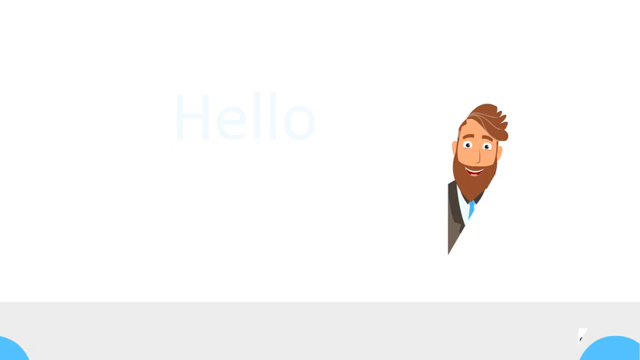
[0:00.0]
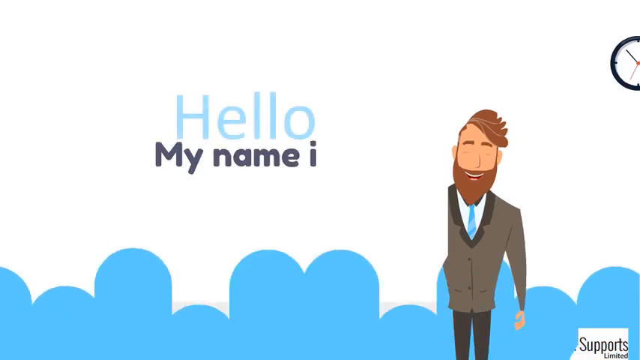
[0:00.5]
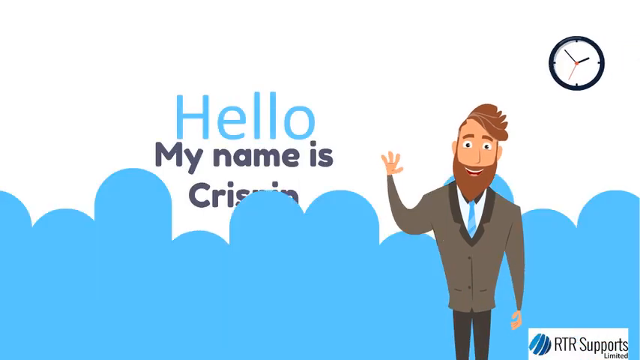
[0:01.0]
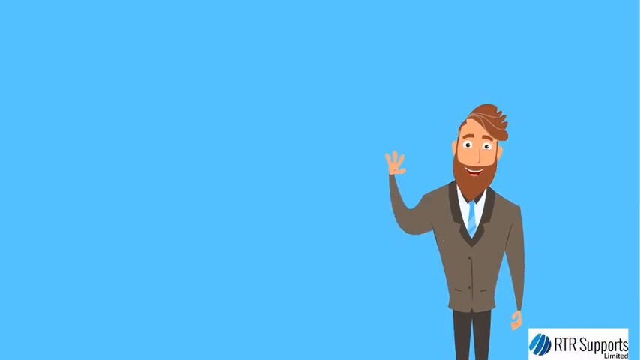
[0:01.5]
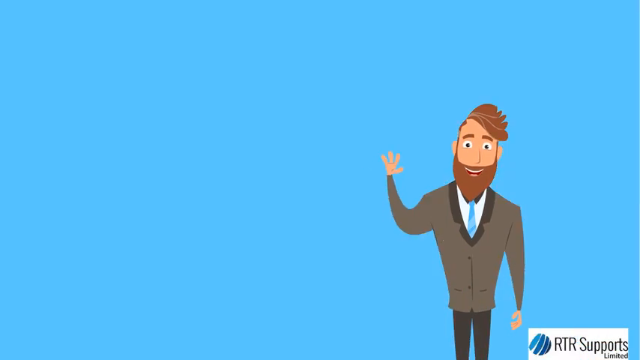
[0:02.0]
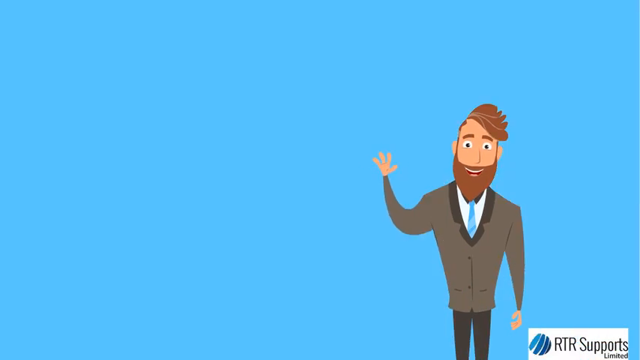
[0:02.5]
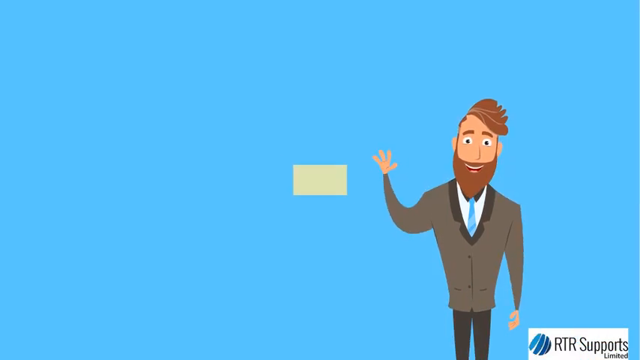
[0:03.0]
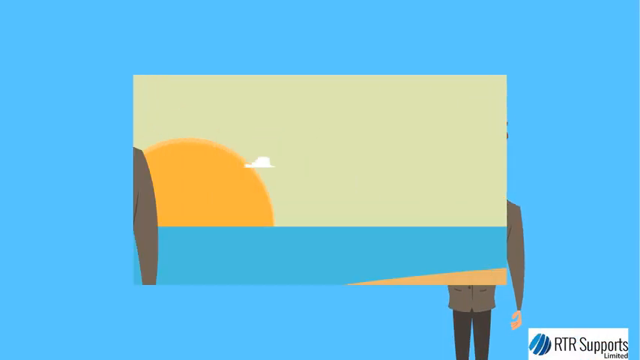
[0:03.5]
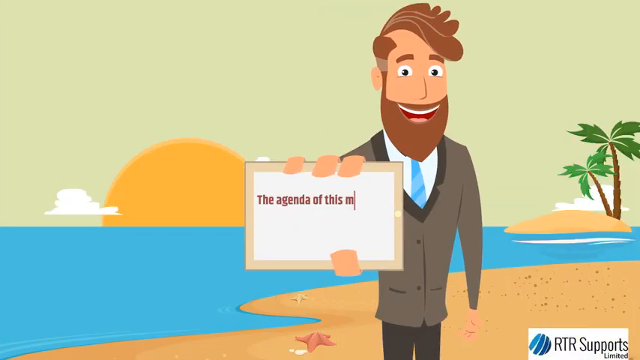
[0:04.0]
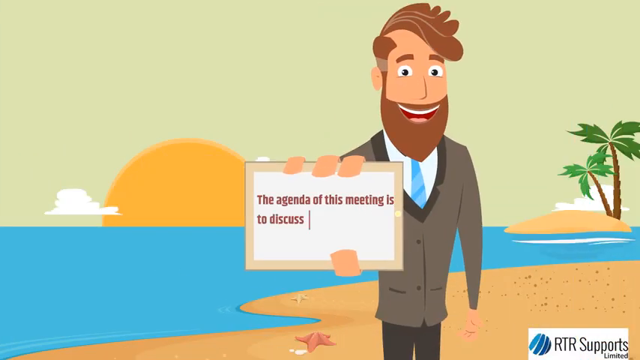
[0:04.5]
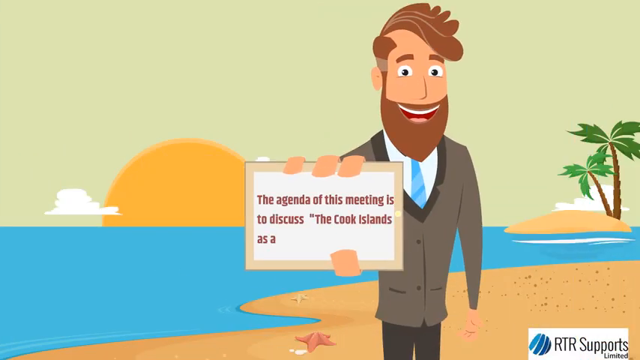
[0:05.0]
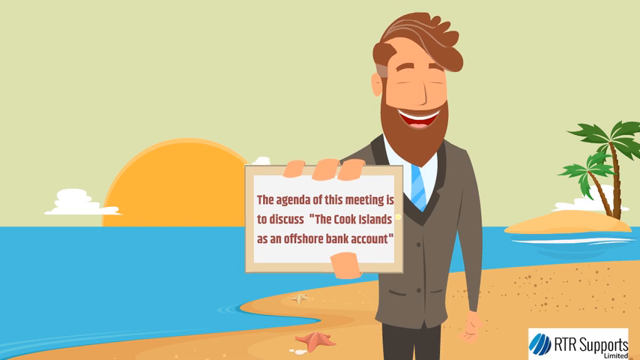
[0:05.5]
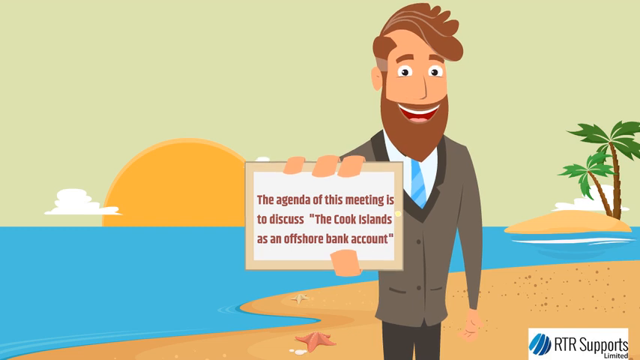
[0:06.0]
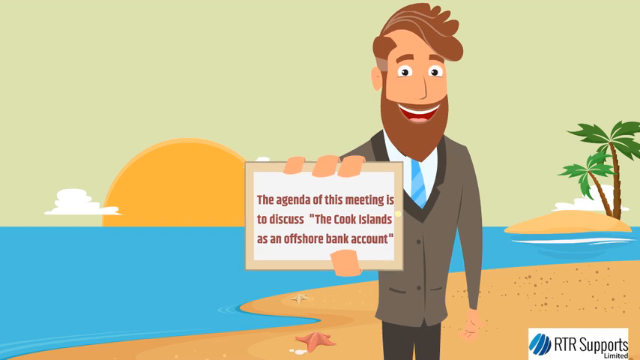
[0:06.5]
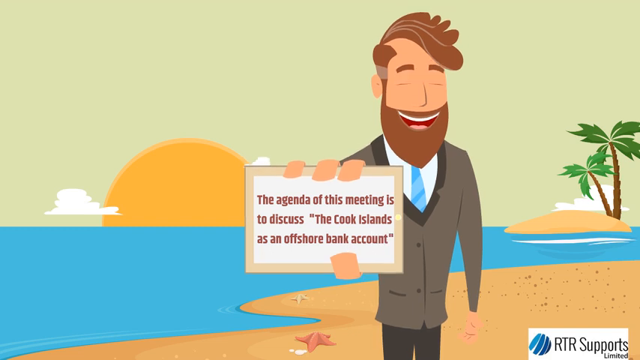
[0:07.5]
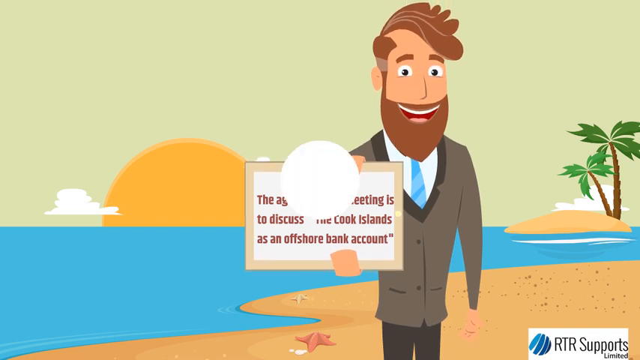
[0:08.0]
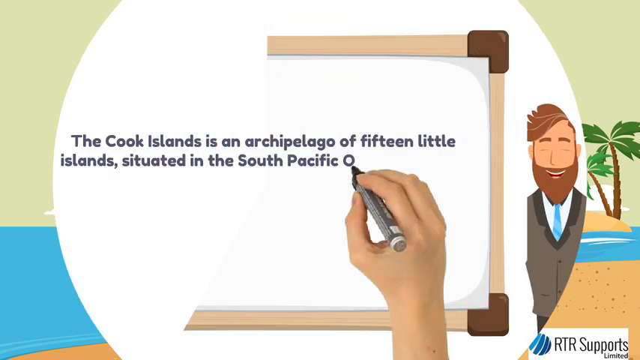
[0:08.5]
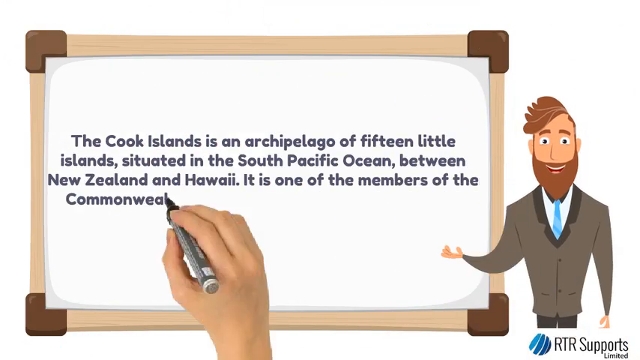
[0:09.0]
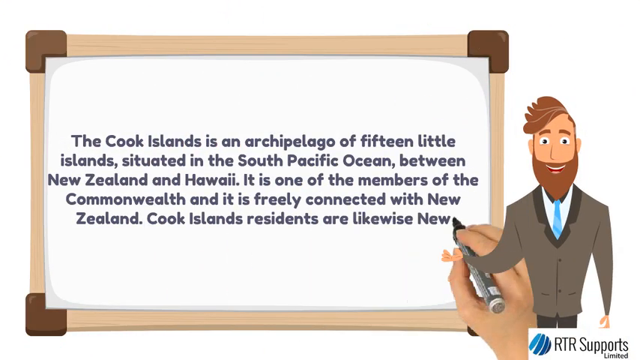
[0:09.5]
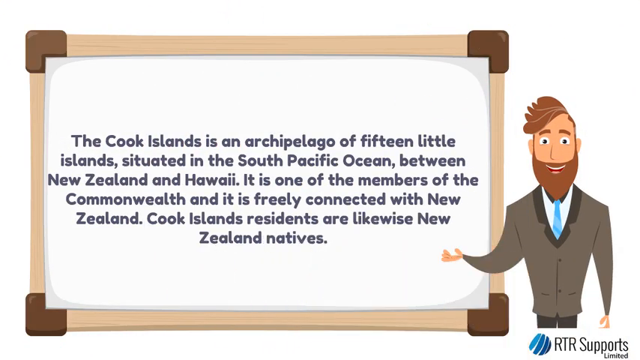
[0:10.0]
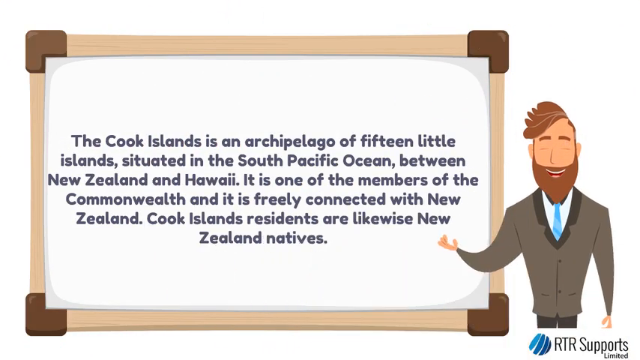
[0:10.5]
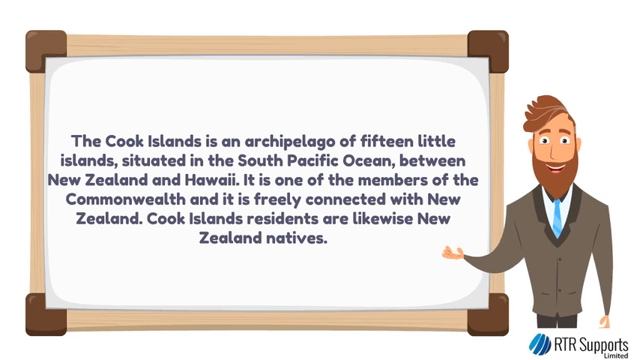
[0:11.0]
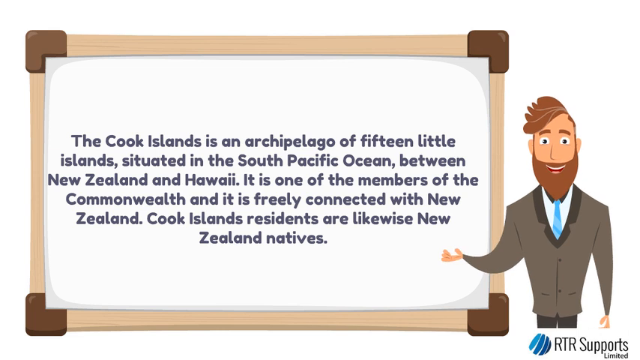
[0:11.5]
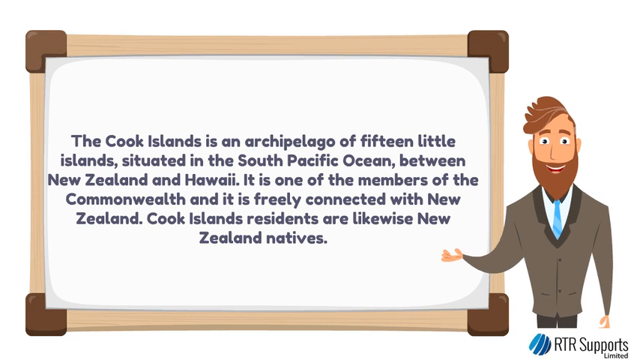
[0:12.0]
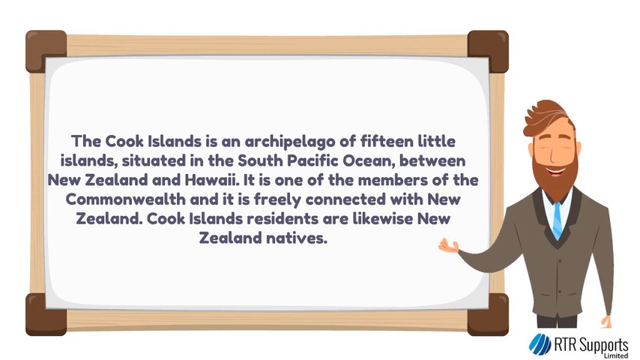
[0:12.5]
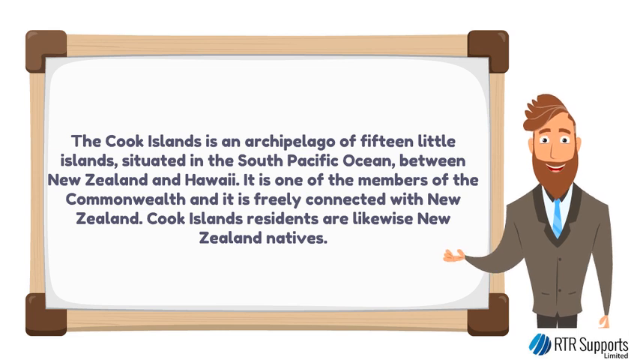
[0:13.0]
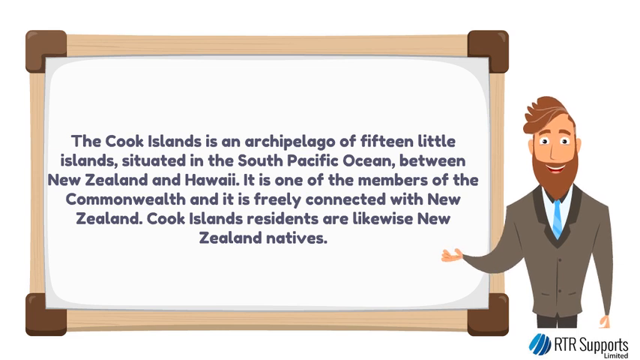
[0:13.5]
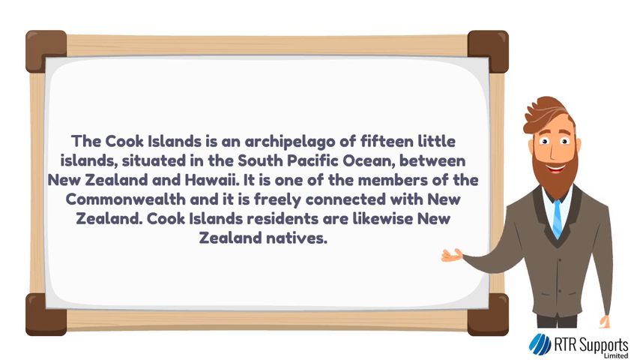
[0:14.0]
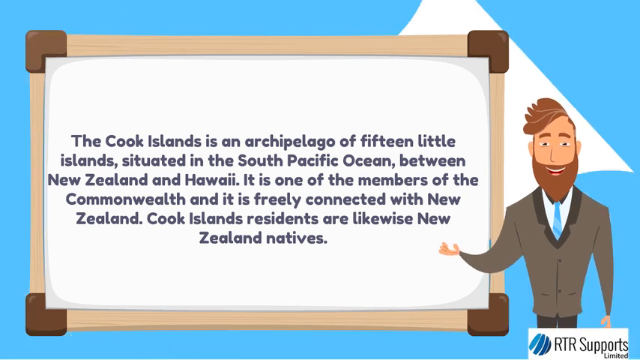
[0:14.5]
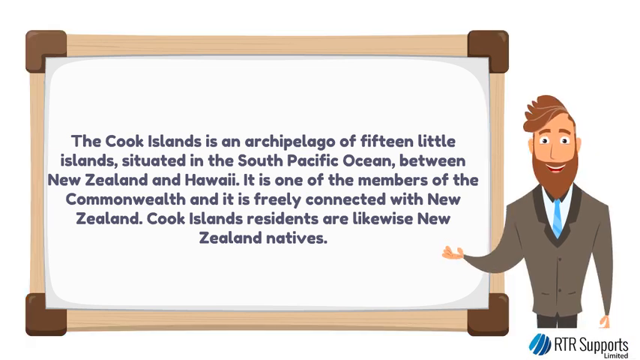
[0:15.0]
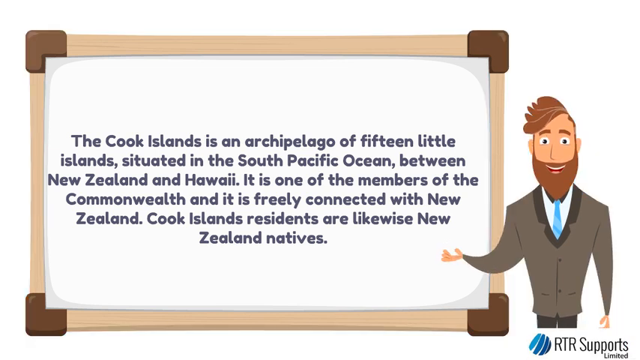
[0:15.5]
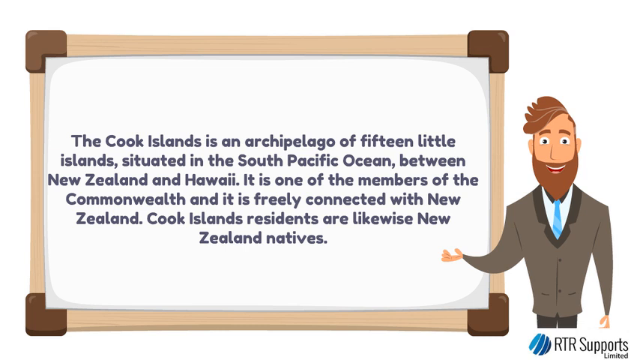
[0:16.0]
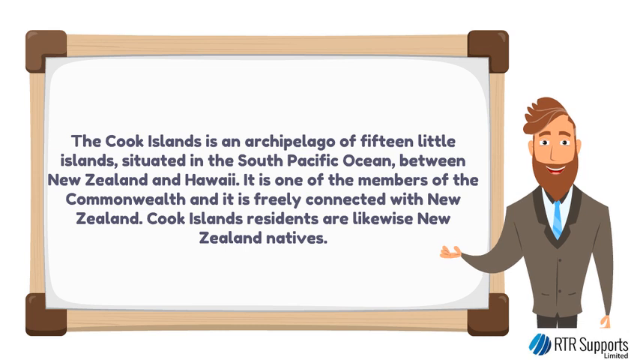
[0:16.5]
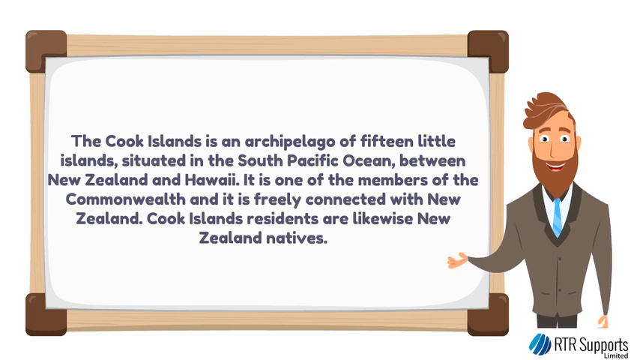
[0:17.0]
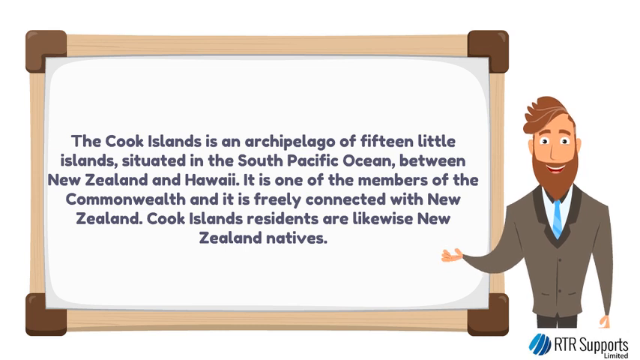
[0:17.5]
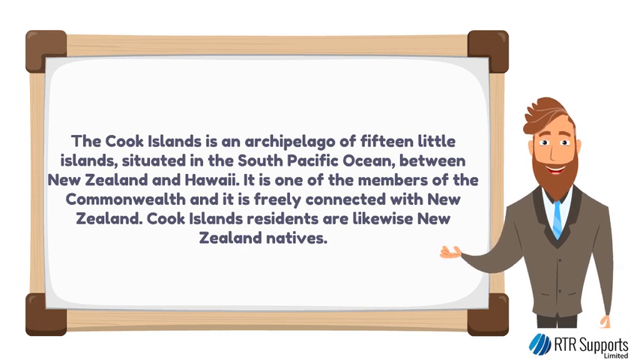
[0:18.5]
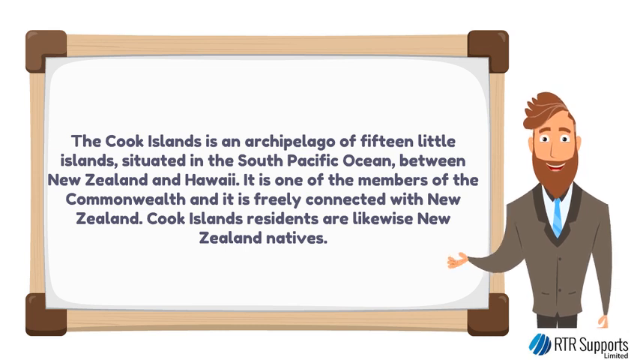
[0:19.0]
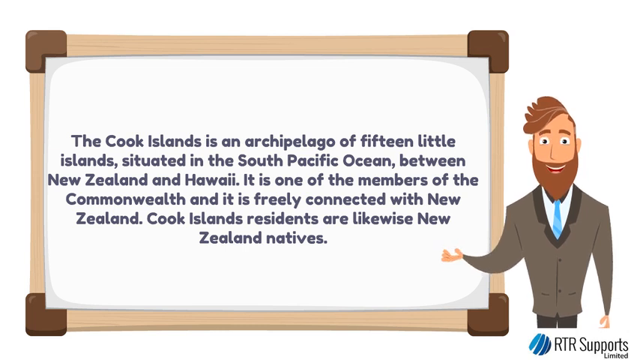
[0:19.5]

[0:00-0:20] The presenter introduces himself as Chris Bend, a giant figure with a big upper body and a very small lower body. "Agenda of the meeting" appears, and the agenda is to discuss the Cook Islands as an offshore bank account. On the board he shows that the Cook Islands are a group of 15 islands situated in the South Pacific Ocean between New Zealand and Hawaii, a member of the Commonwealth and clearly connected with New Zealand, with residents who are likewise New Zealand natives.